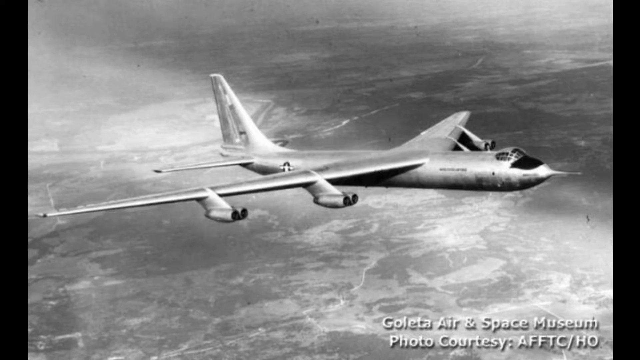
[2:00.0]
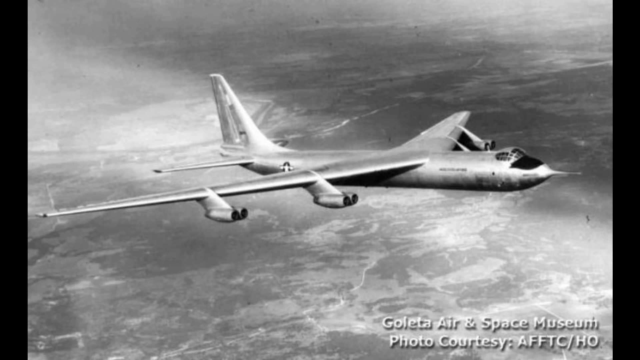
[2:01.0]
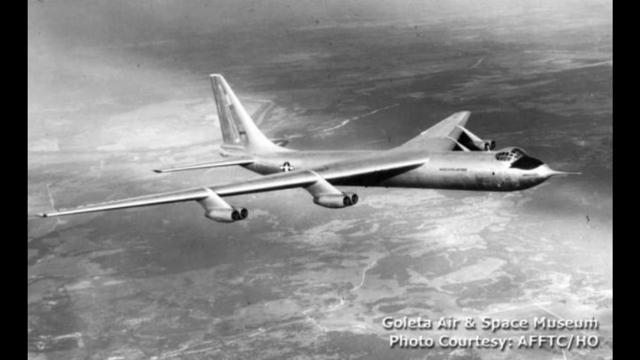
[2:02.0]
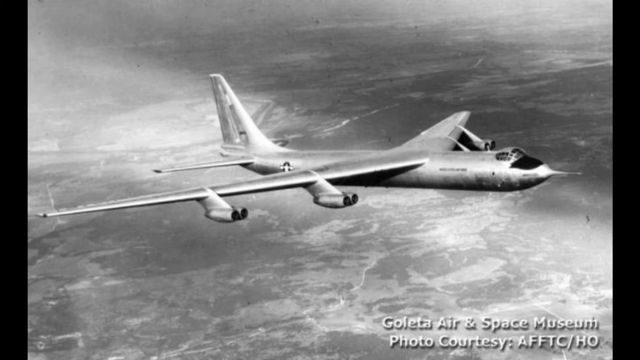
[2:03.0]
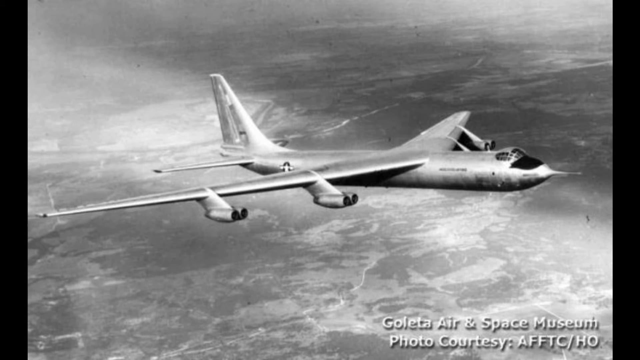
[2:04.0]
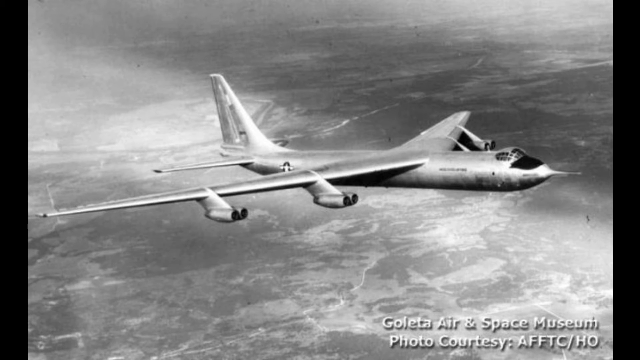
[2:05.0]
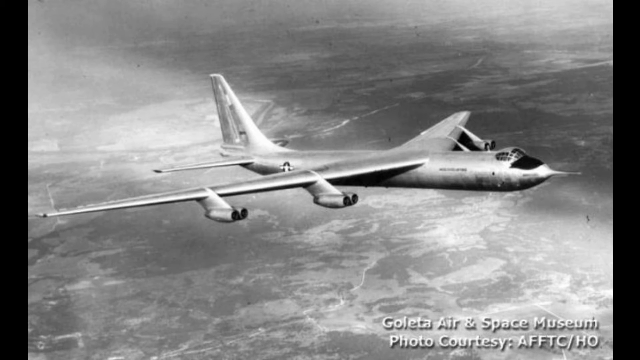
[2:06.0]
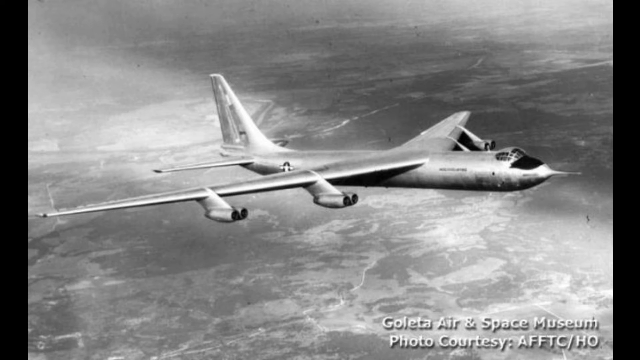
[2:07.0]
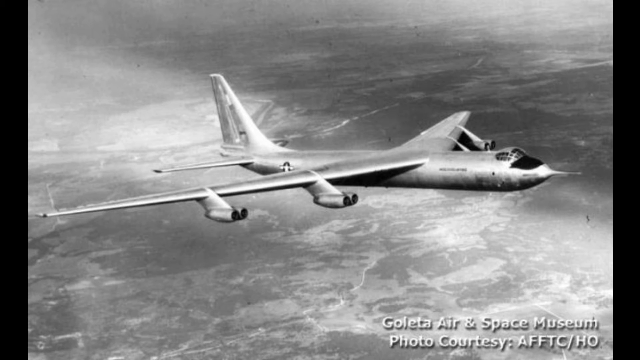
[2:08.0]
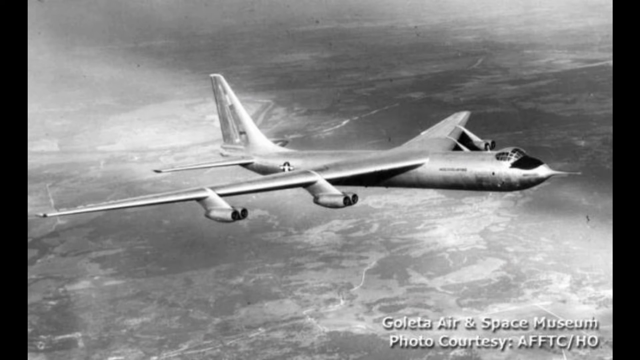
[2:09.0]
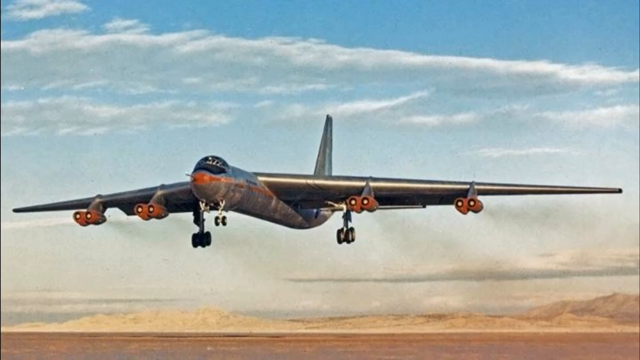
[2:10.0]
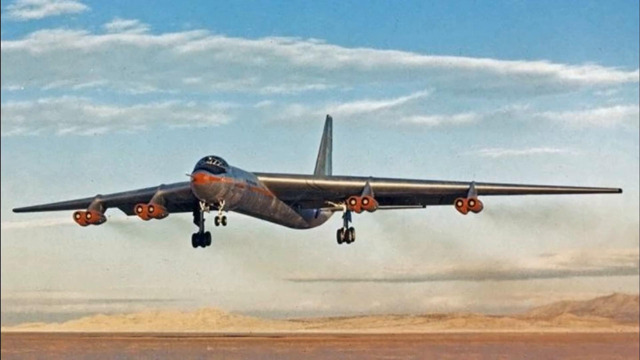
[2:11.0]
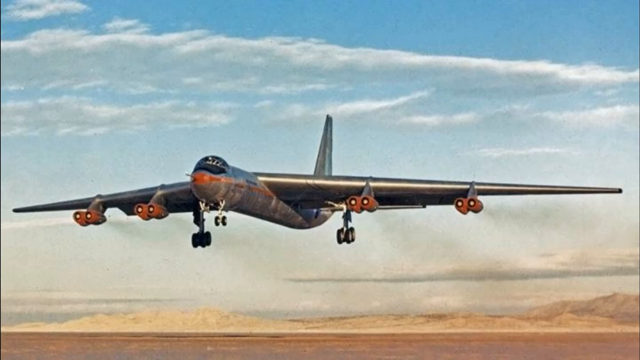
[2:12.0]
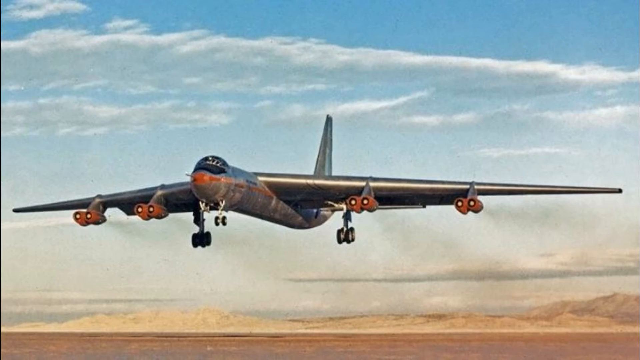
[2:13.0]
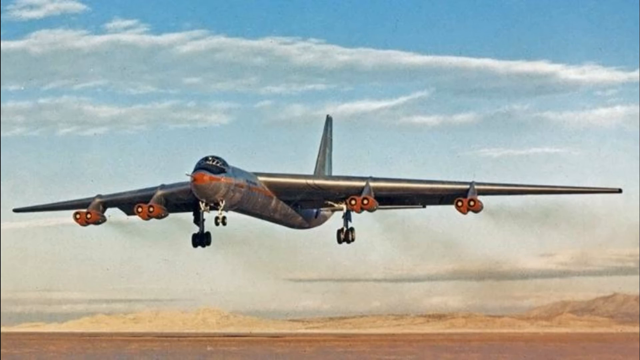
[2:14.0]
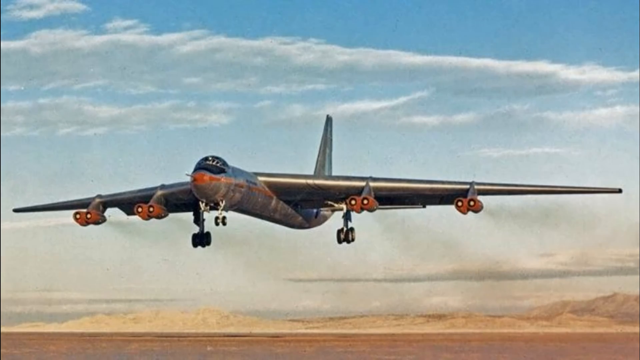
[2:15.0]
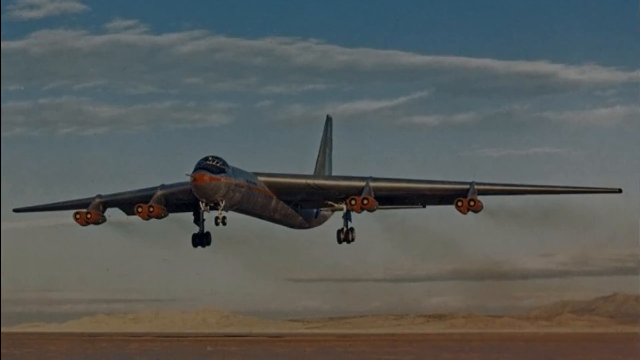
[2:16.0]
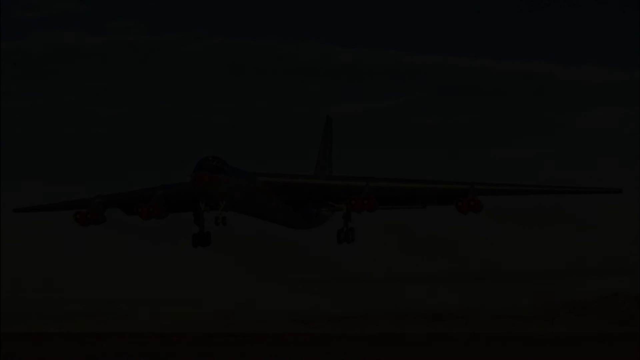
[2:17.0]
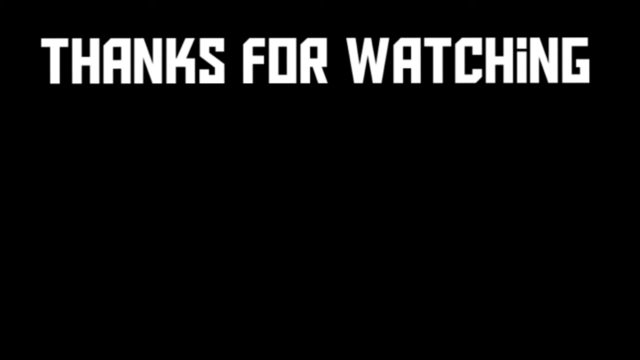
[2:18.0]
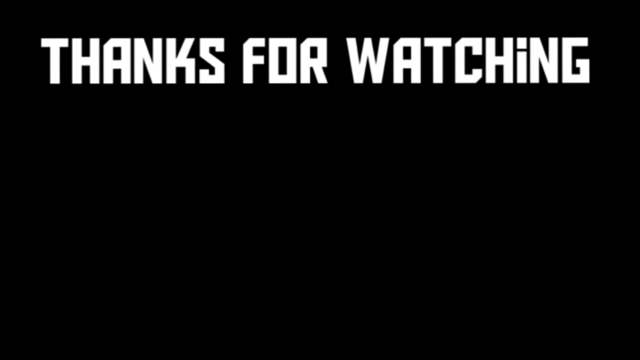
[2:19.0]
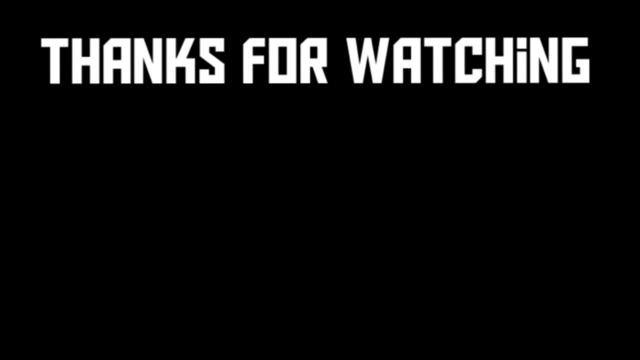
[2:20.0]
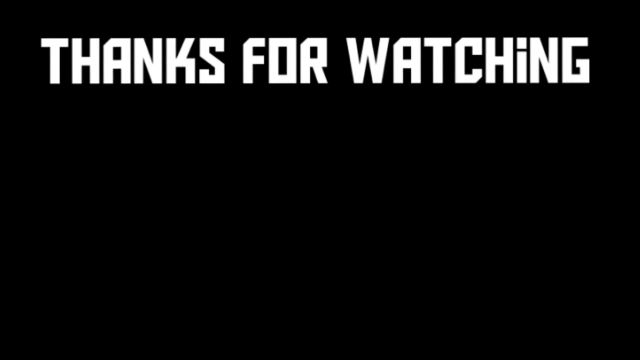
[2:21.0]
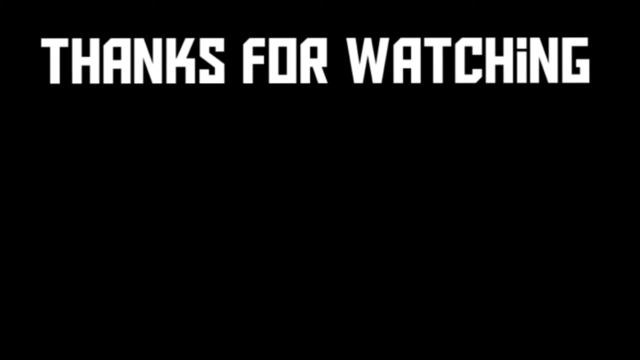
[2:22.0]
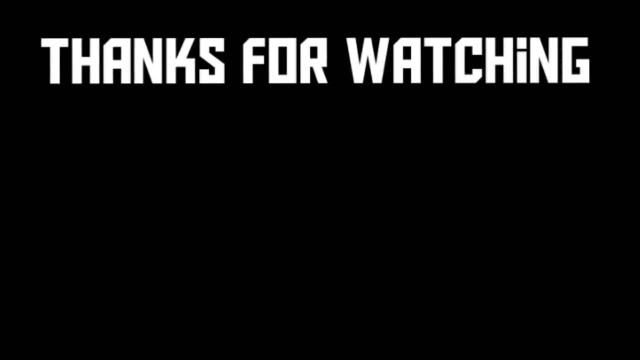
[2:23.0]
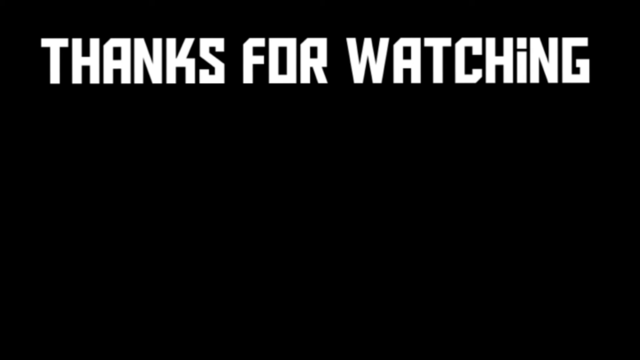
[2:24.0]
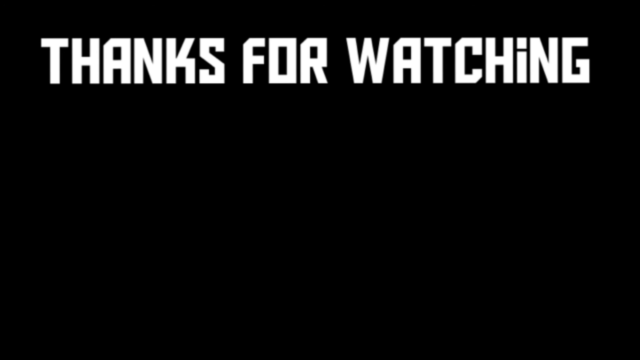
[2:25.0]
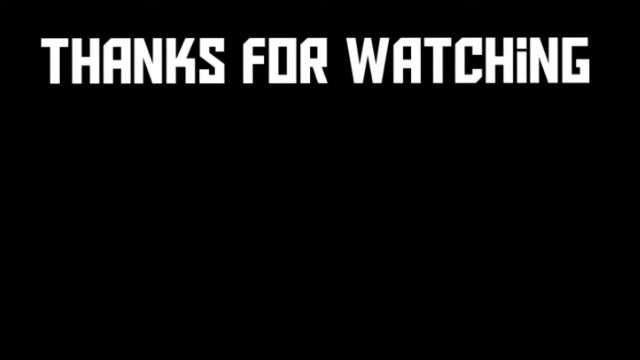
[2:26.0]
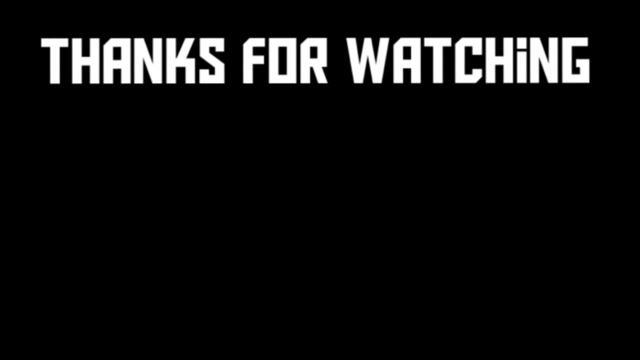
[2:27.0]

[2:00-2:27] A still image of the aircraft carries some text on the screen that is very hard to see due to the age of the footage; it appears to read "Goleta Air and Space Museum, photo courtesy: AFFTC", with the rest not visible. The still shows the B-36 again in flight above empty land, with different splashes of color in the land and maybe a few rivers or lakes here and there. At the end of the video, a title screen with an all-black background shows white letters reading "thanks for watching", all uppercase except the i in watching, which is lowercase.